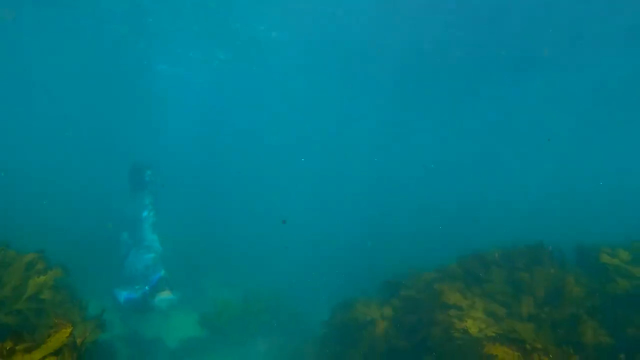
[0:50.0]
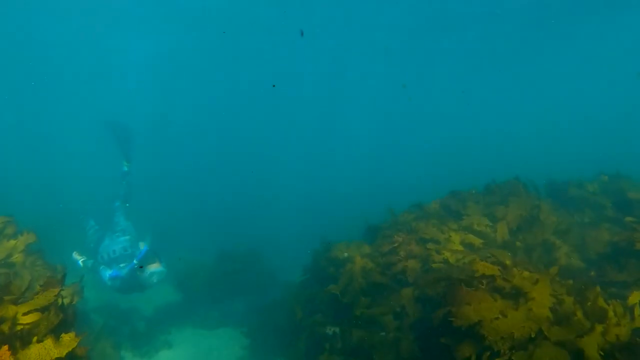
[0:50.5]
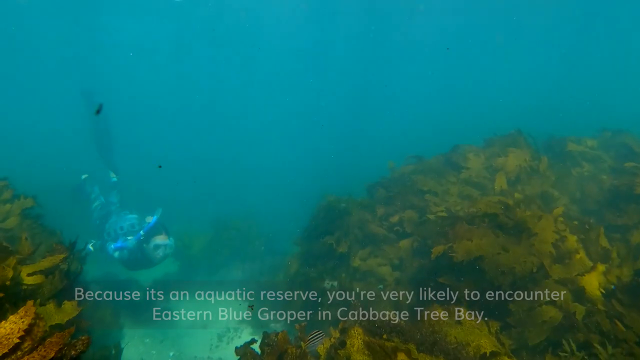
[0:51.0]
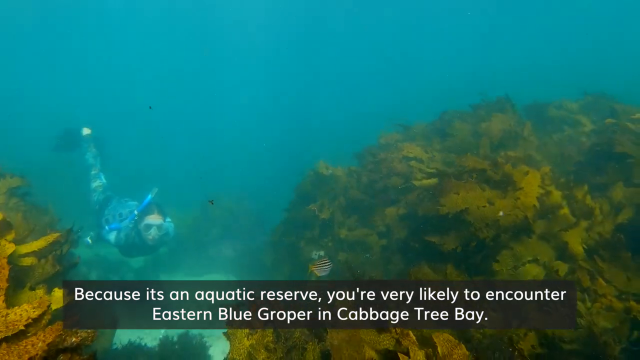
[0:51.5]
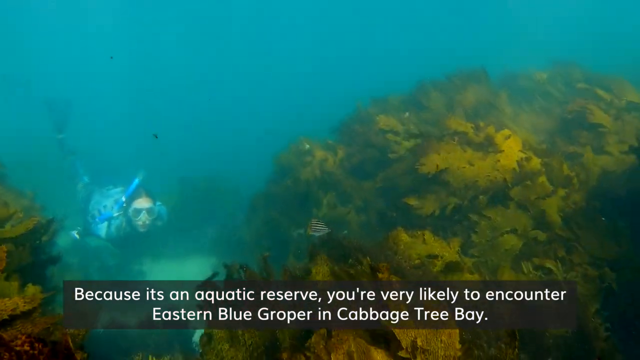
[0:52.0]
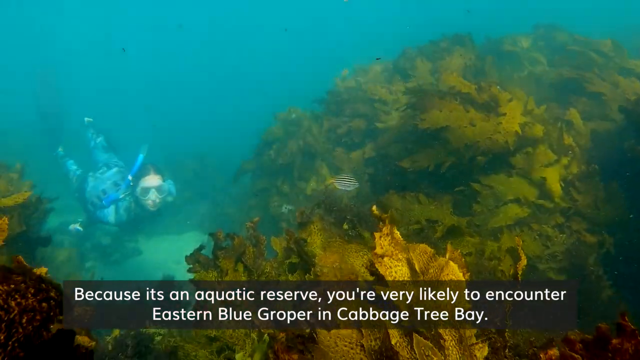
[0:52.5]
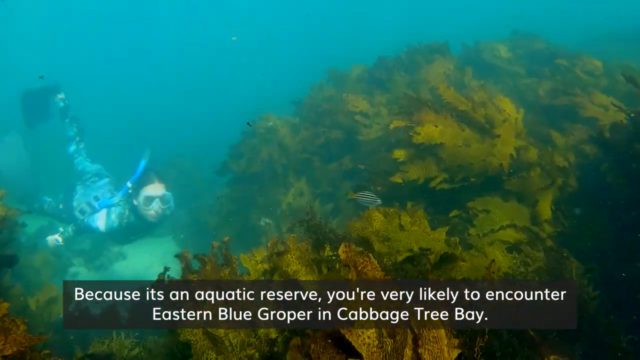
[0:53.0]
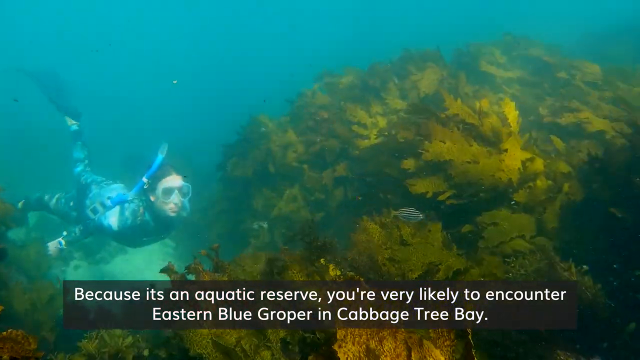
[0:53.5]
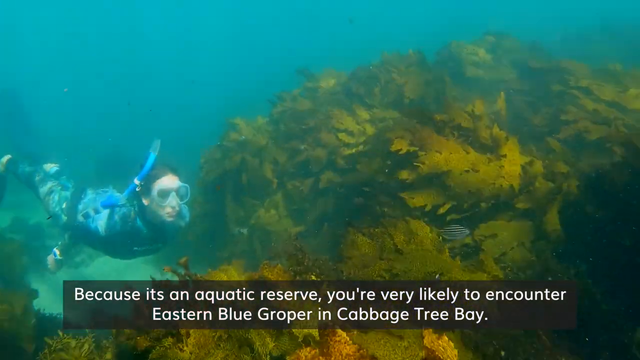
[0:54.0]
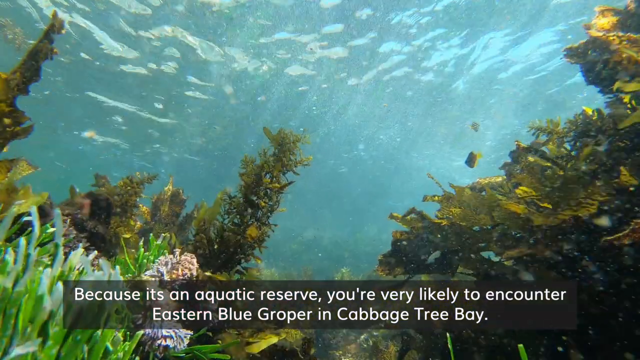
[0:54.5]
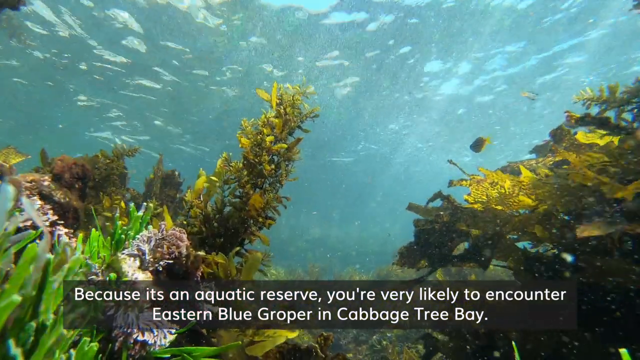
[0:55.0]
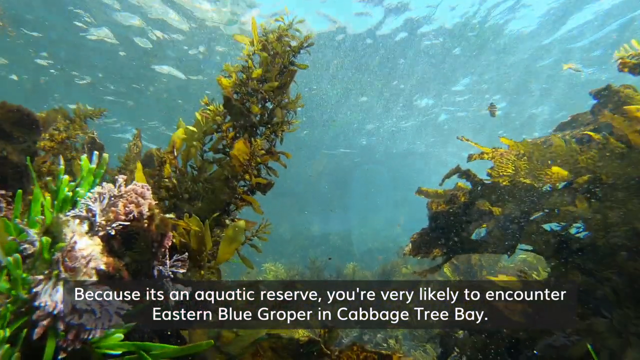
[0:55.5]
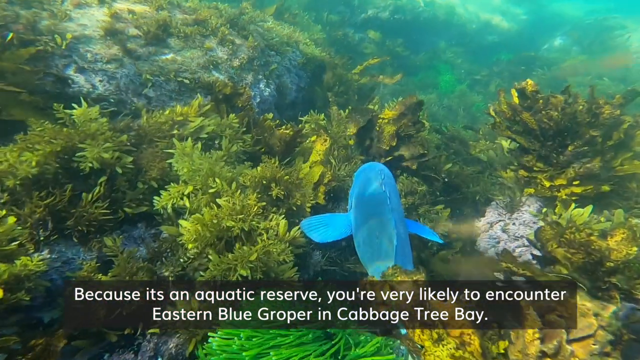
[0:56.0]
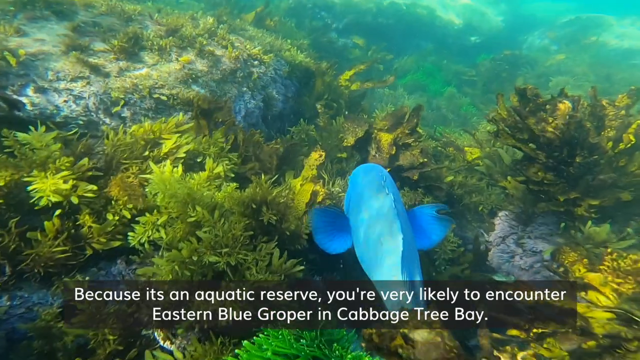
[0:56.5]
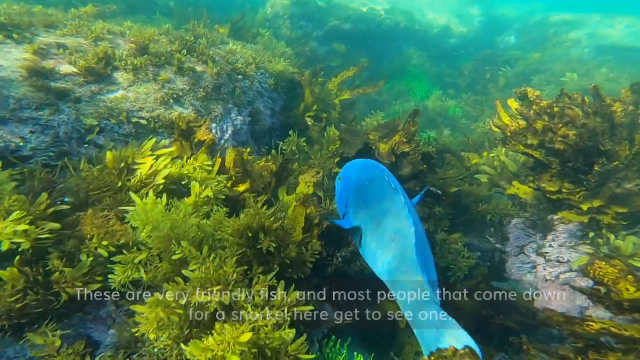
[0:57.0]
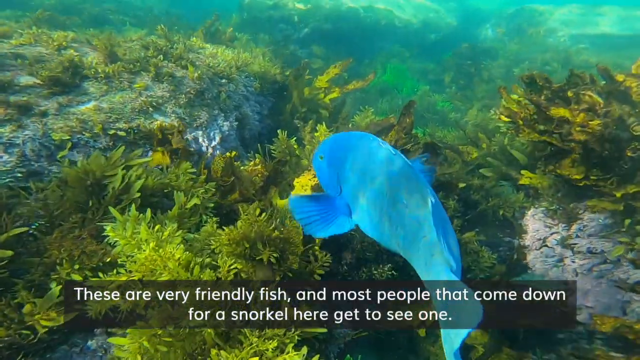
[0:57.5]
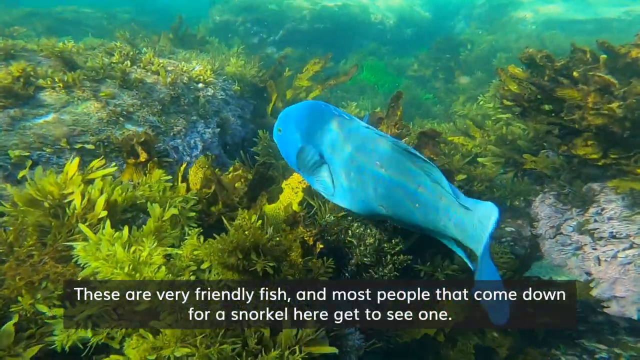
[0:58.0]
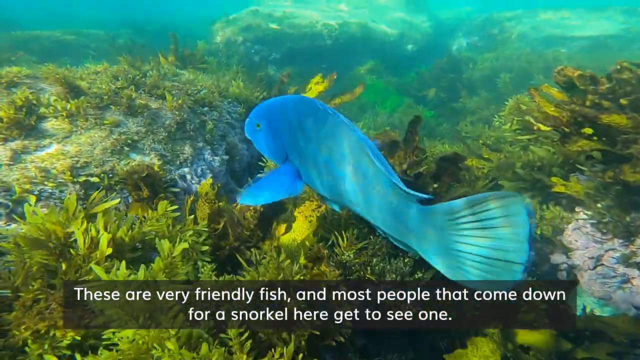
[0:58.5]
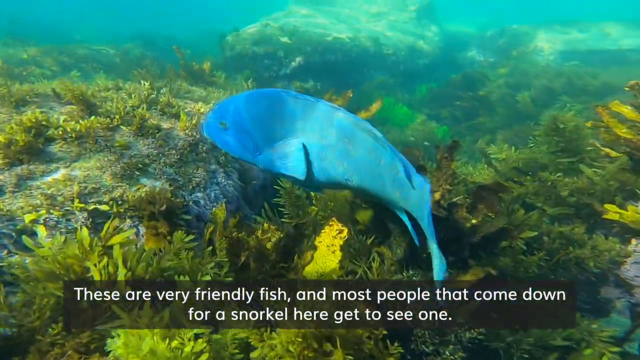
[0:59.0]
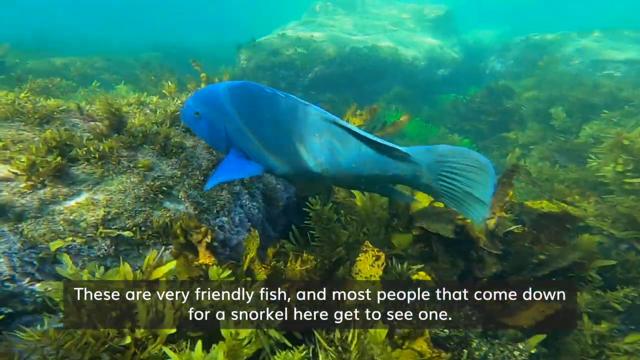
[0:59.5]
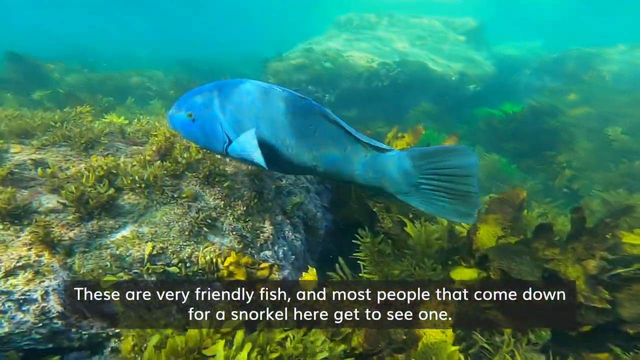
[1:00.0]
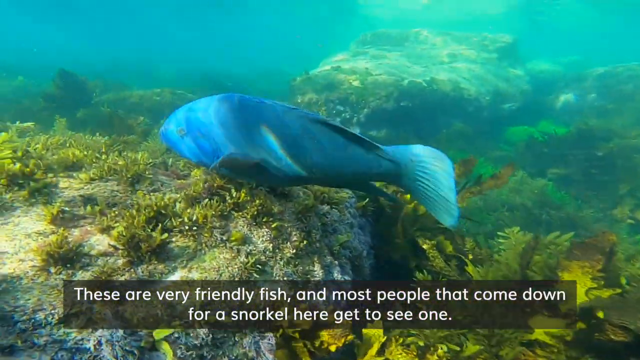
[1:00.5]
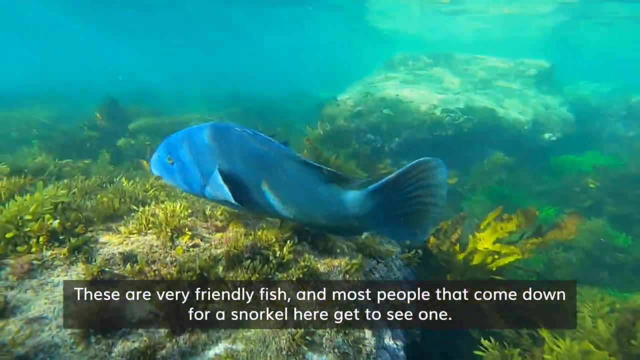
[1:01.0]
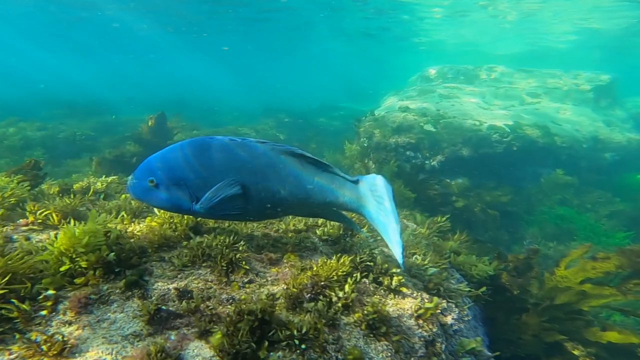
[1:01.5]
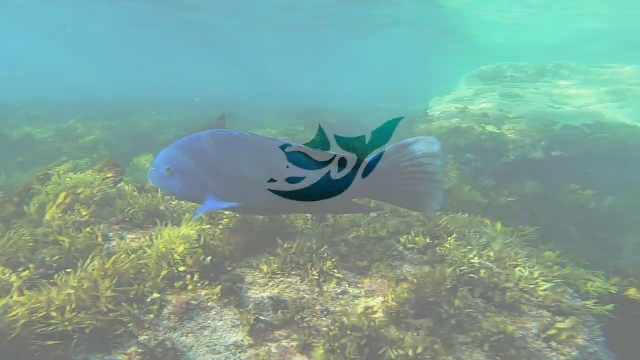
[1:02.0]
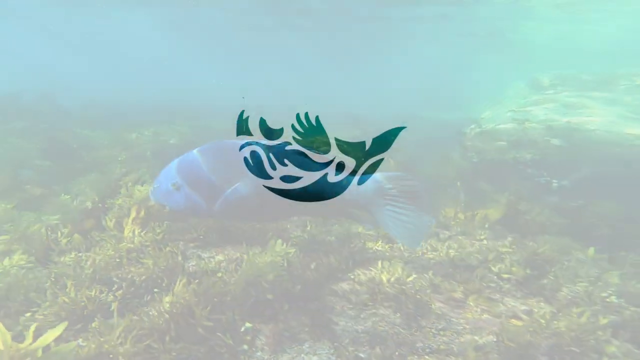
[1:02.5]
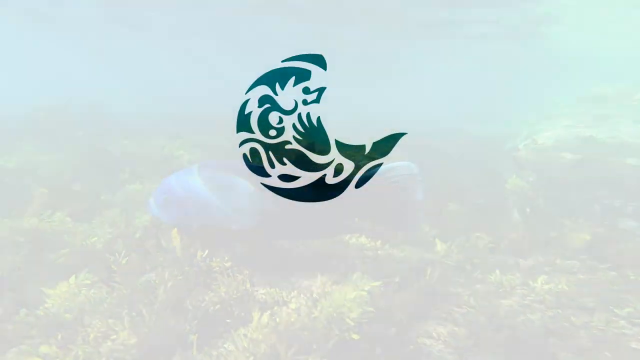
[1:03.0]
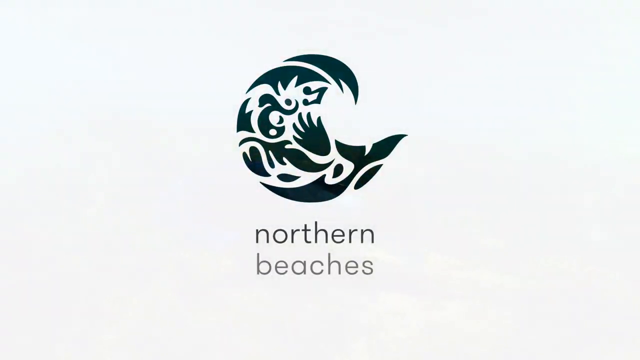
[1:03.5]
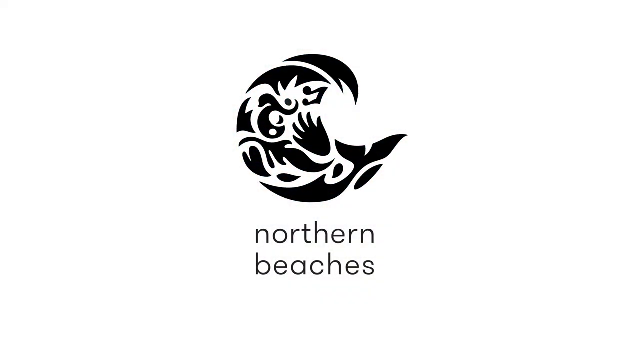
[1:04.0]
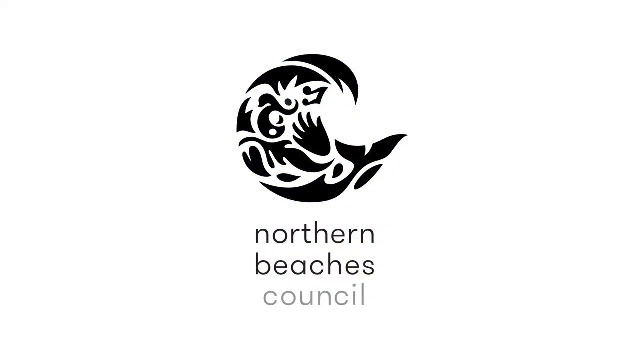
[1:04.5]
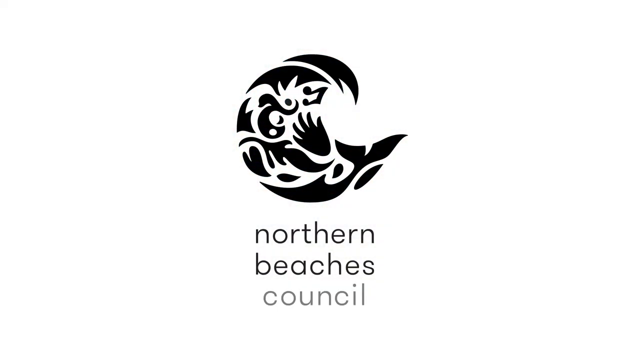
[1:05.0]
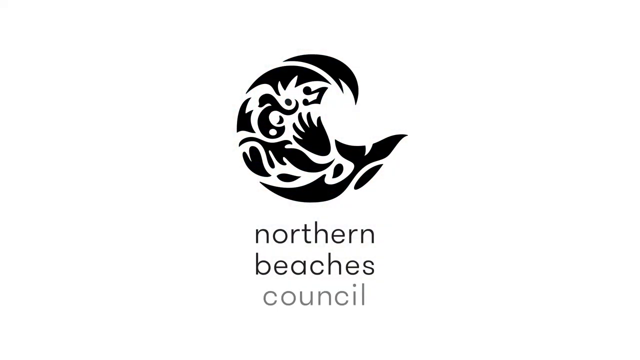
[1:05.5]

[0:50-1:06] A diver appears underwater; her face indicates she is a woman, and she dives from the far end toward the camera. On the other side there are some yellow things. All of this happens at the bottom of the water, with water above, and behind the diver the water is wide and blue. The video then transitions to some plants underwater, inside which a blue fish swims around, flapping its fins. Later, a logo appears on a white background with the words "Northern Beaches" written below it.